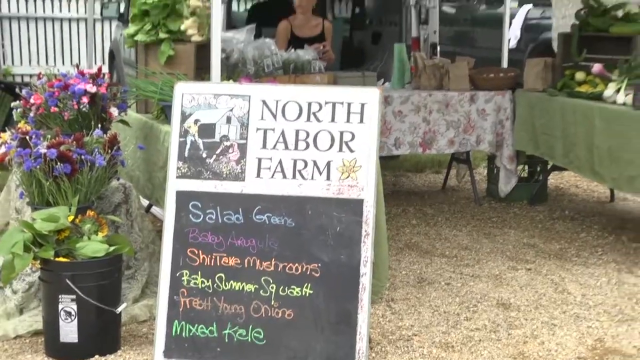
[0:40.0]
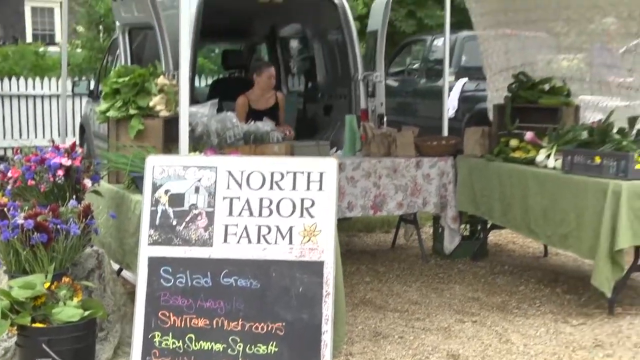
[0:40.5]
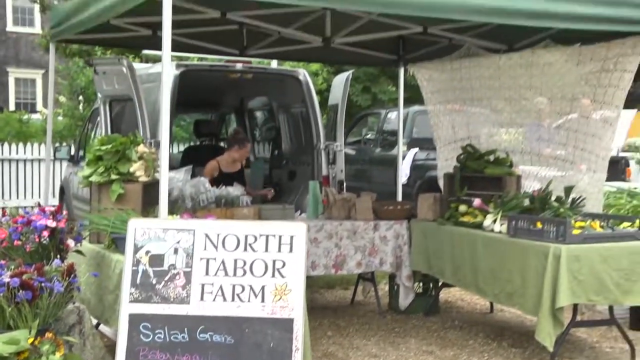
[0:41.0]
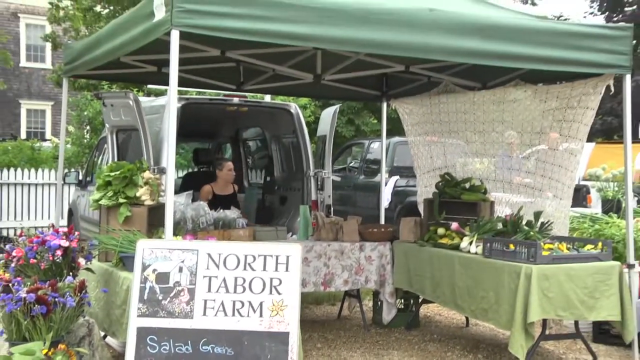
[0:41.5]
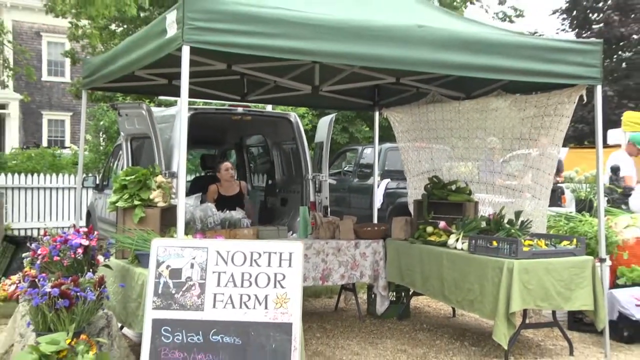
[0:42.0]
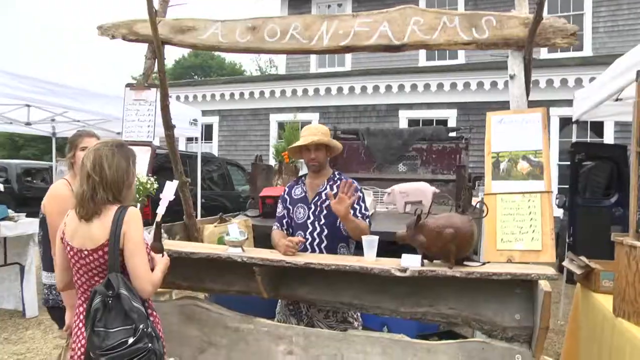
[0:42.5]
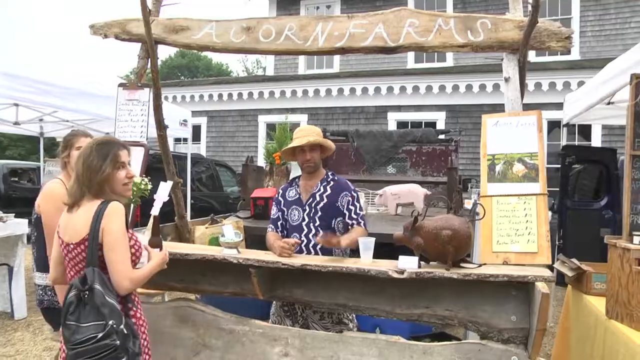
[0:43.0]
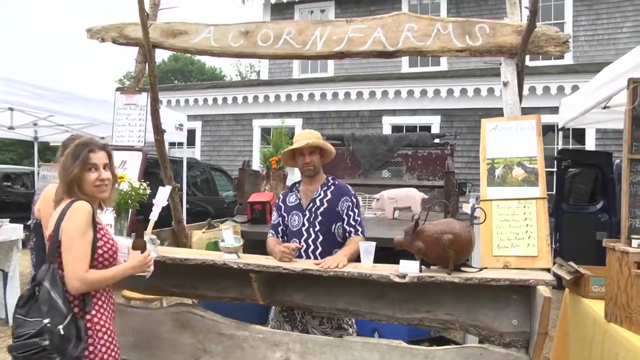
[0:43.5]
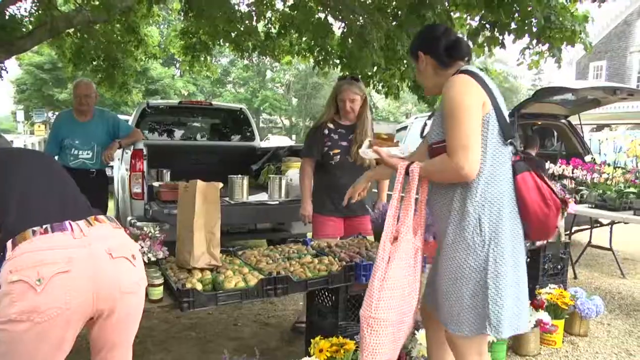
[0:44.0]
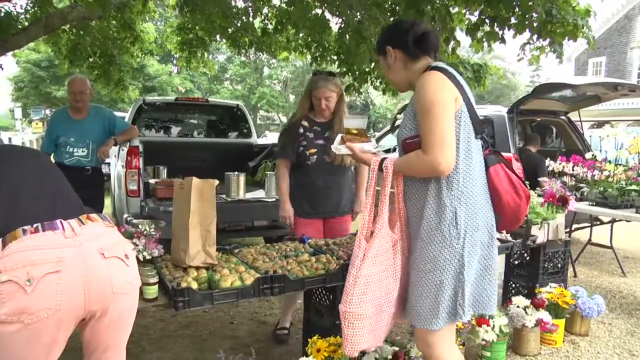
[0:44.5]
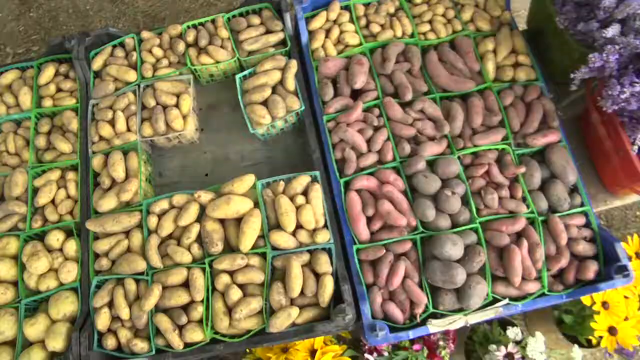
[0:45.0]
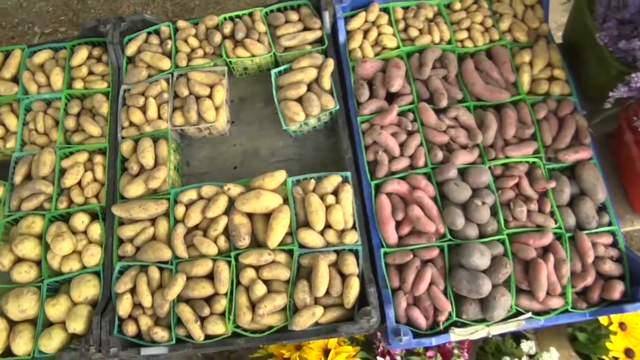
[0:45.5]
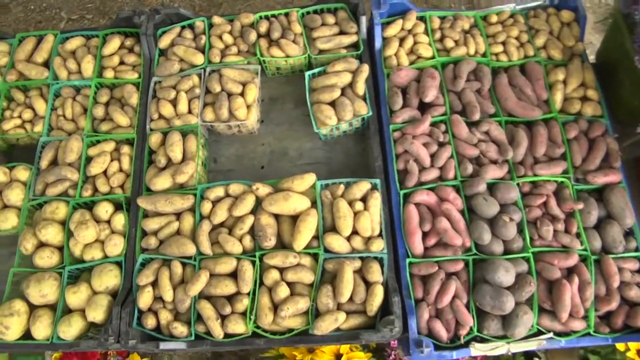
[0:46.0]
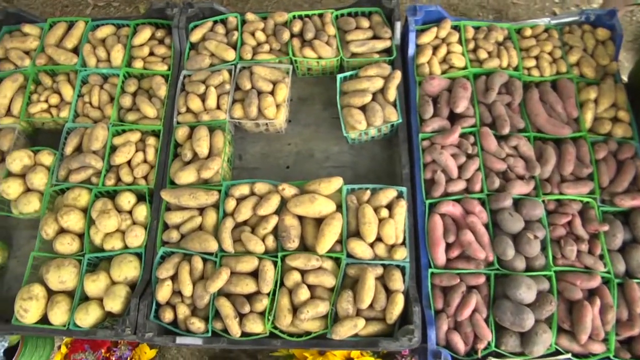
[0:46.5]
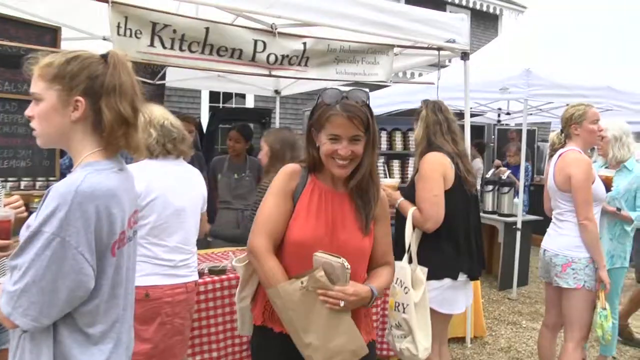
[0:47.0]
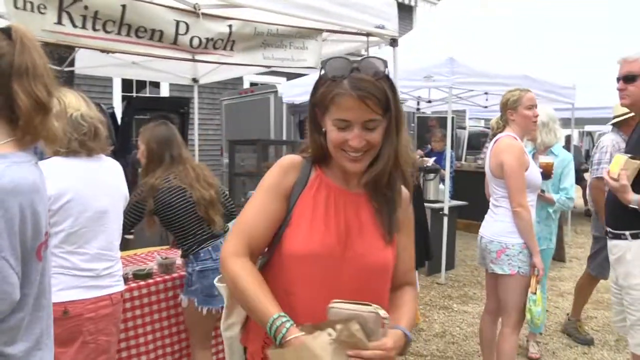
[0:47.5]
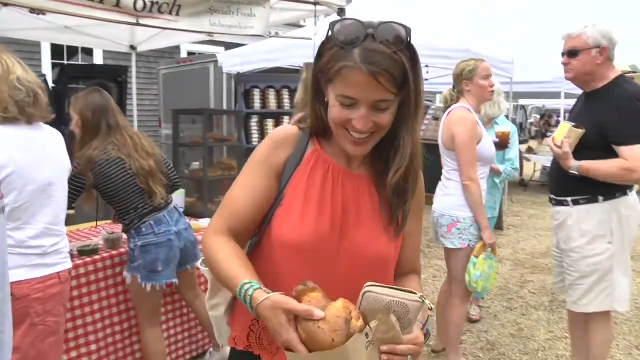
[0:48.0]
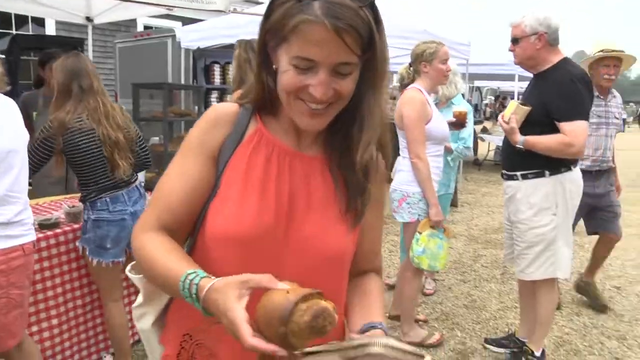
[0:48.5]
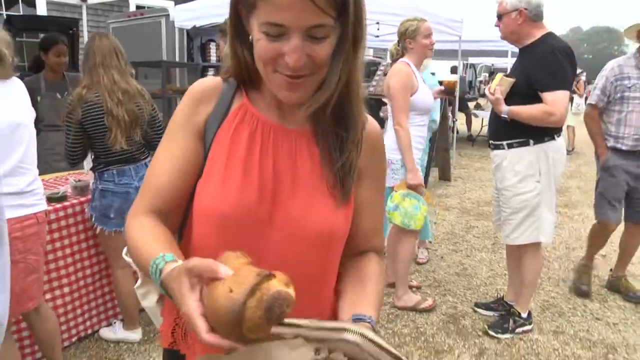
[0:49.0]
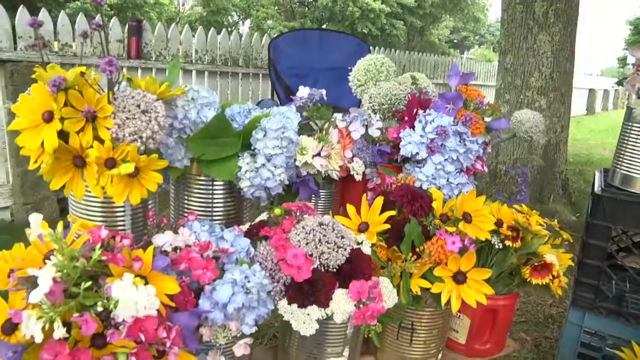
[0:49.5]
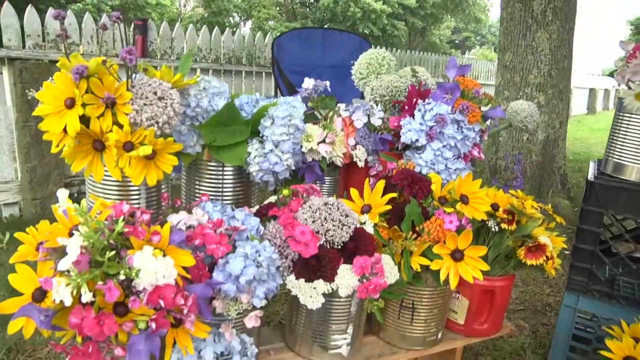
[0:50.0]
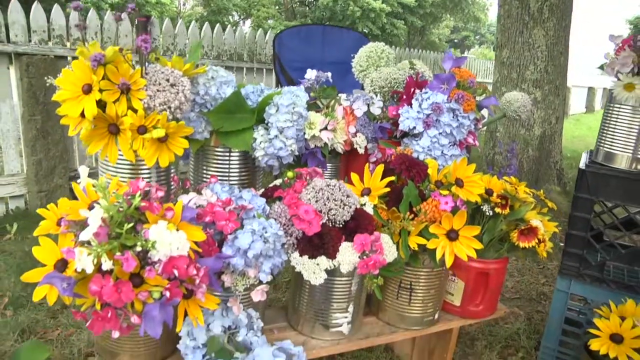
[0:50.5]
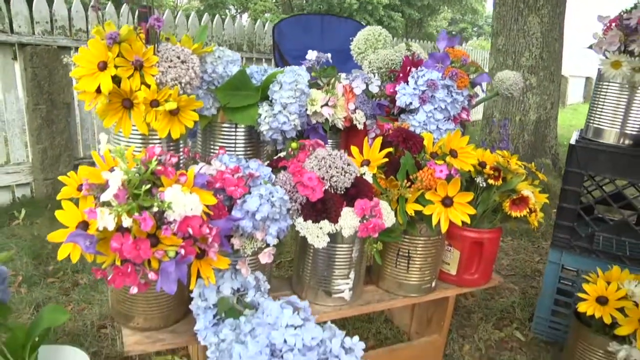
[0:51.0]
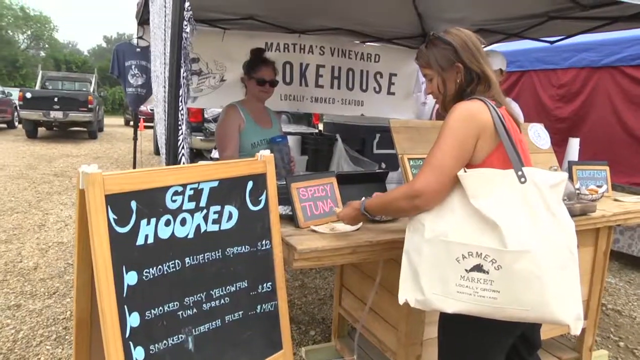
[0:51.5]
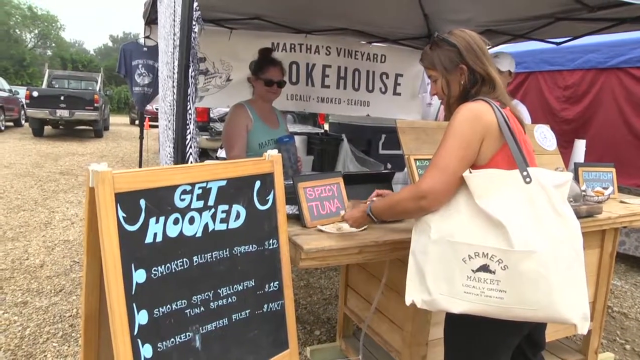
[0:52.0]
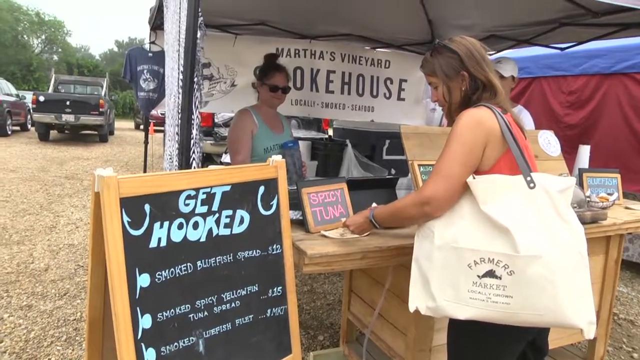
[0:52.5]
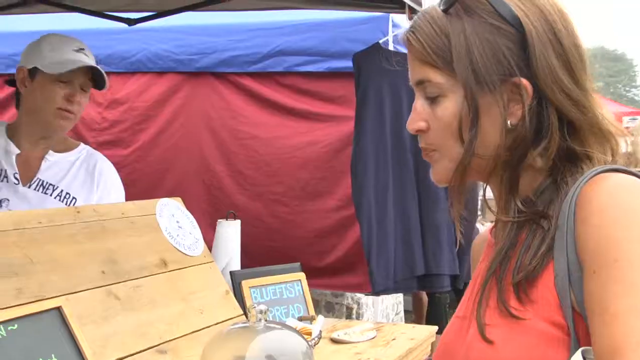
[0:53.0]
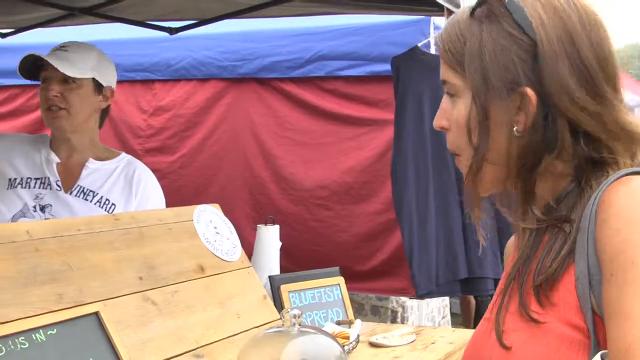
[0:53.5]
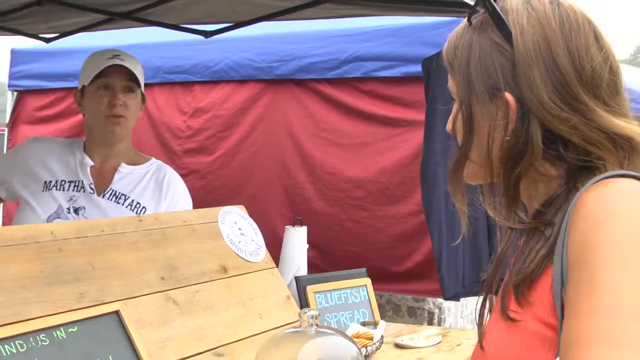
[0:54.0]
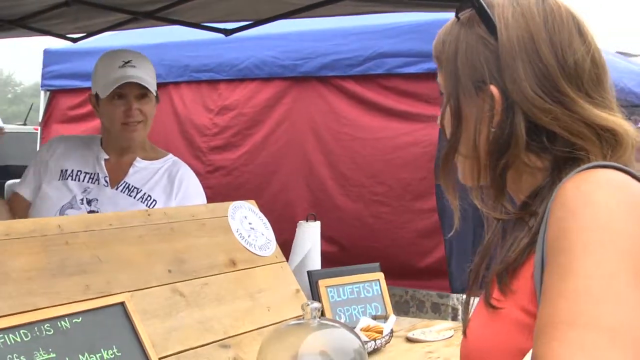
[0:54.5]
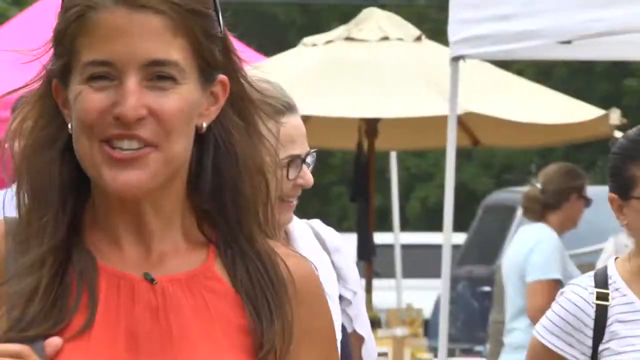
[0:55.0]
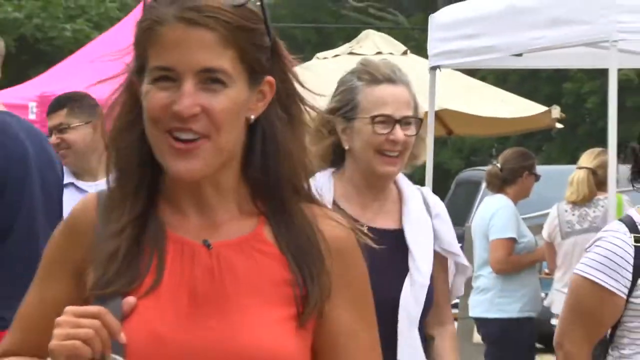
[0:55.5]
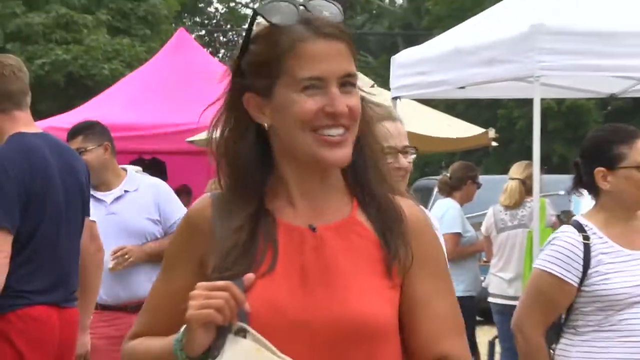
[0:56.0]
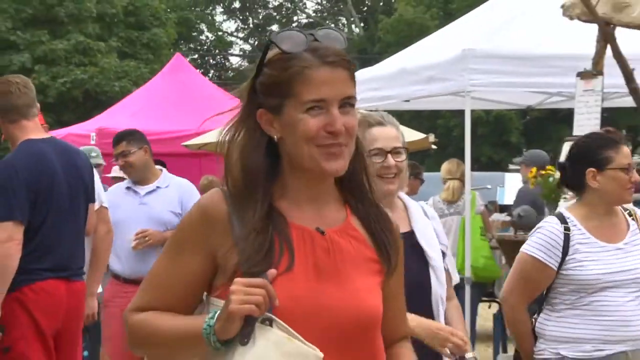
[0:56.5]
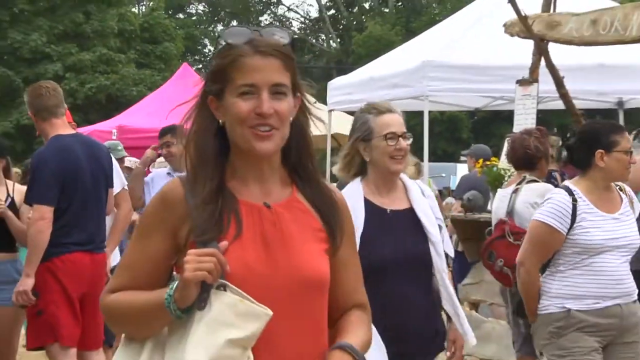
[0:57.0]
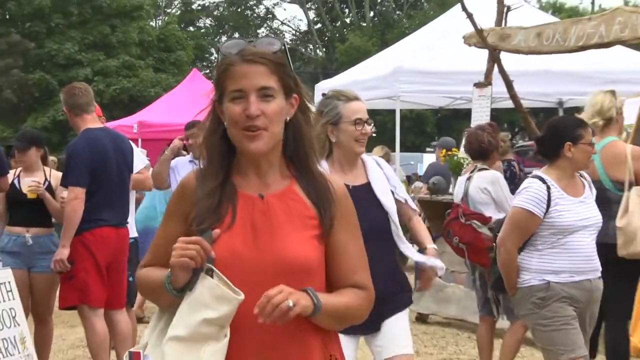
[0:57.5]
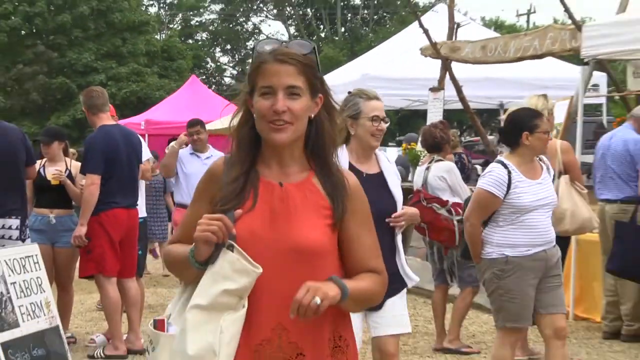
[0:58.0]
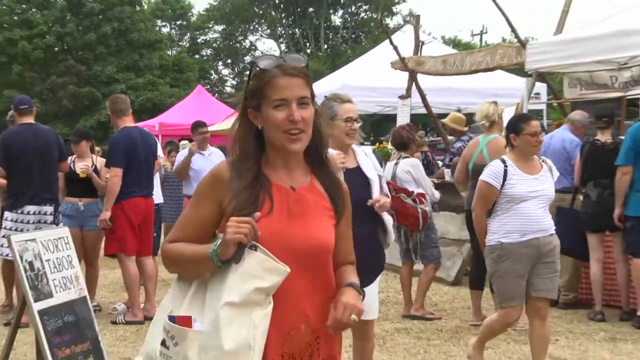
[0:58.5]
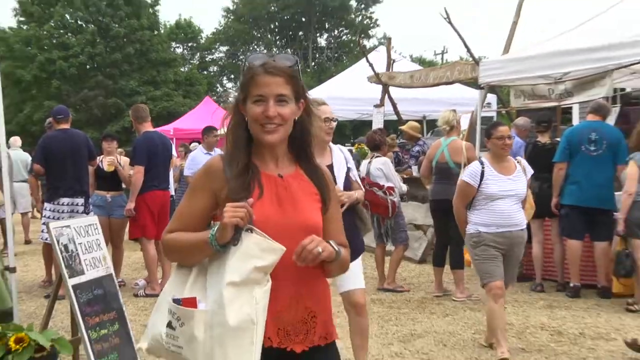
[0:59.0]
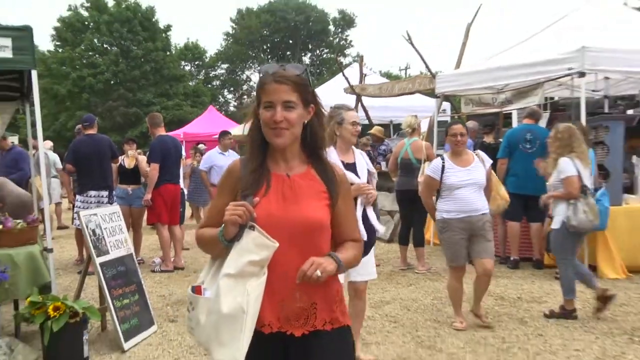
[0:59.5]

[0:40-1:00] The scene shows Acorn Farms. A gentleman in a straw hat, with facial hair and a short-sleeved blue shirt with white patterns, serves from the stall to a lady in a red and white spotted dress with a black backpack. The scene cuts to another stall where fresh vegetables can be purchased; a lady looks at the produce while holding a soft drink and her bag, and the camera shows the produce, including potatoes. The lady in the red dress, with brown shoulder-length hair and sunglasses on her head, shows her purchase. A view follows of an array of flowers: yellow sunflowers and pink, mauve, white and green flowers. The lady in the red top with brown shoulder-length hair is at a stall selling various tuna items, including smoked bluefish and smoked spicy yellowfin tuna spread, and she tries the spread. She then walks towards the camera, talking to it, while various people mingle and look at the stalls in the background. North to Bore Farm has various fresh items, including mushrooms.